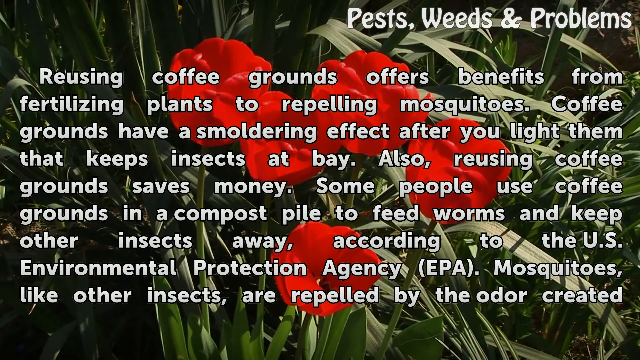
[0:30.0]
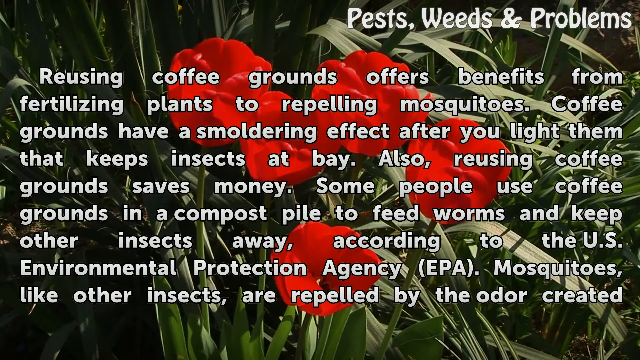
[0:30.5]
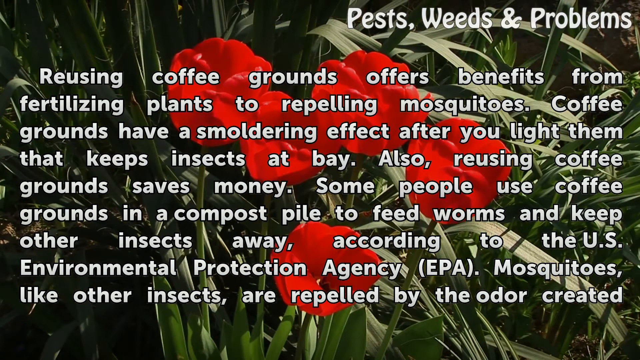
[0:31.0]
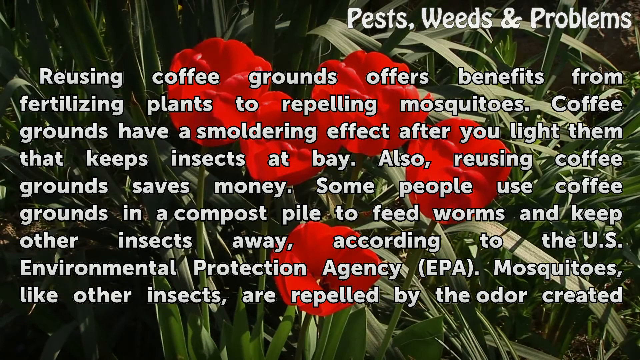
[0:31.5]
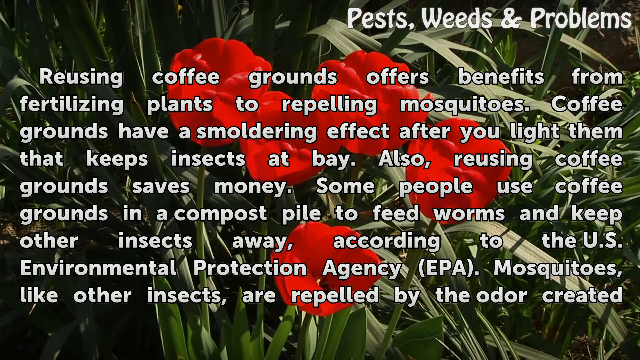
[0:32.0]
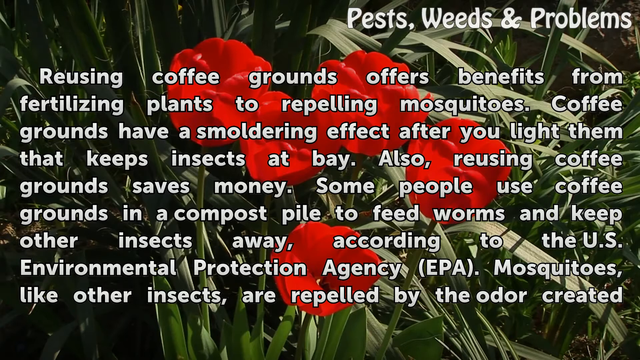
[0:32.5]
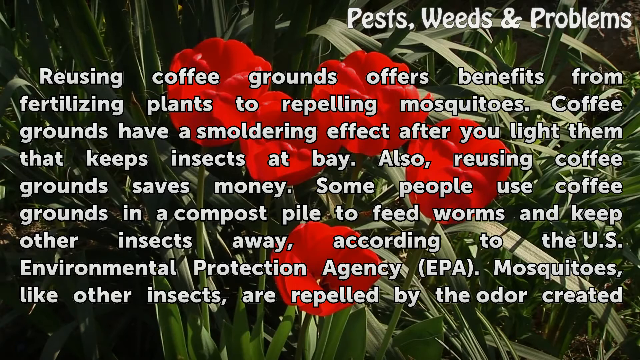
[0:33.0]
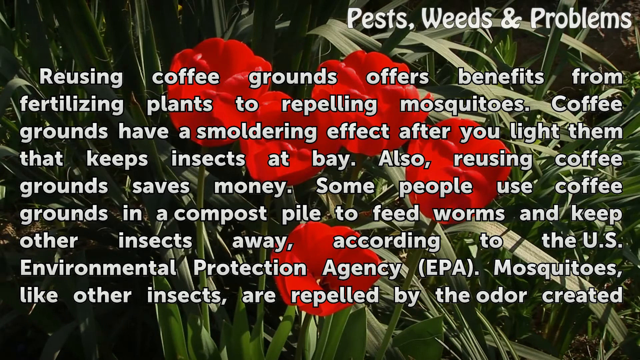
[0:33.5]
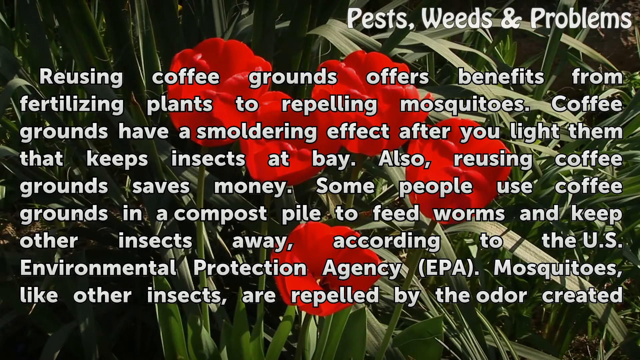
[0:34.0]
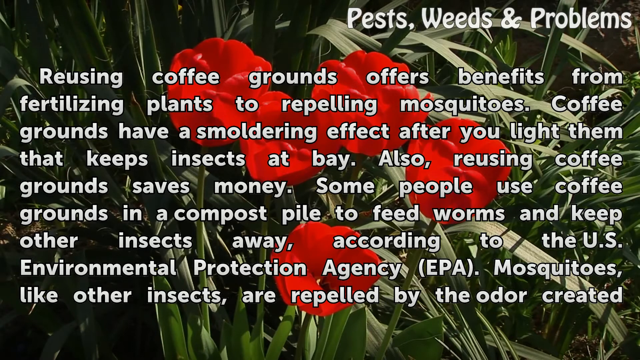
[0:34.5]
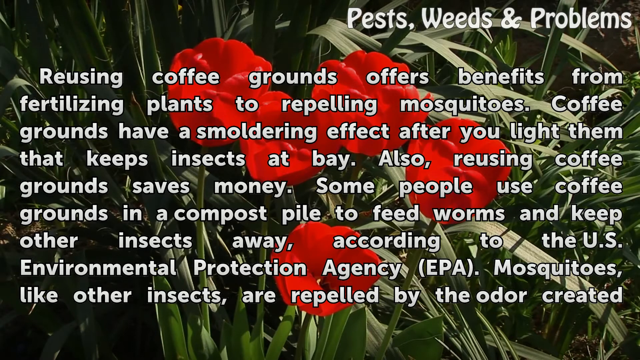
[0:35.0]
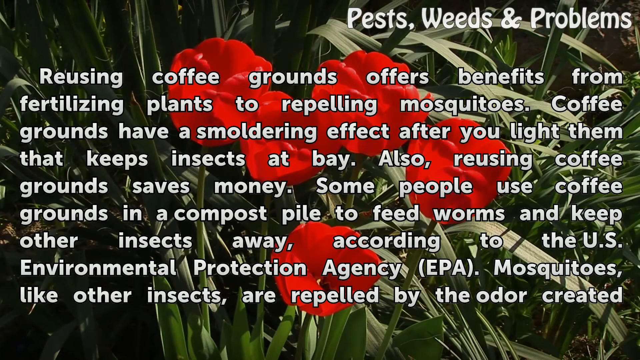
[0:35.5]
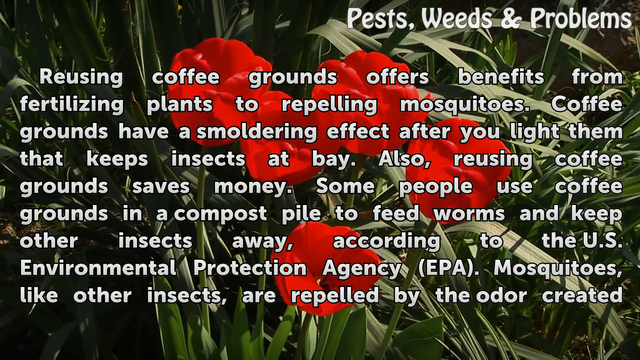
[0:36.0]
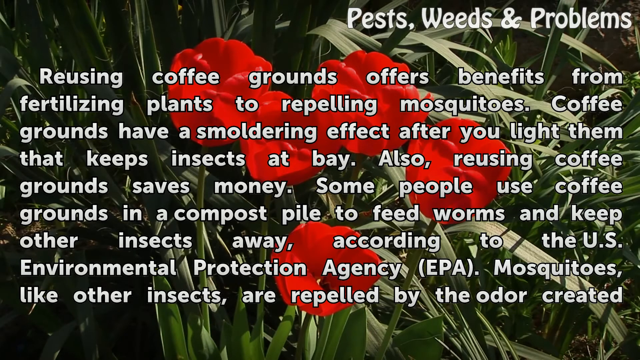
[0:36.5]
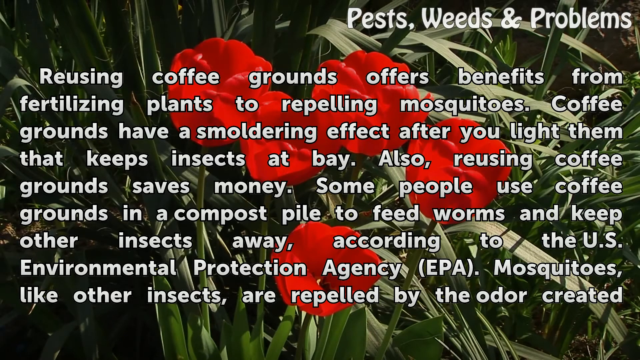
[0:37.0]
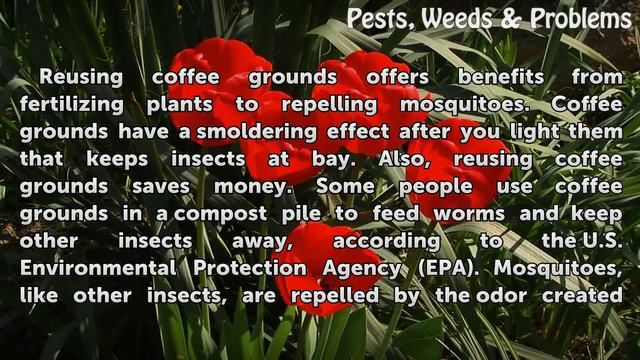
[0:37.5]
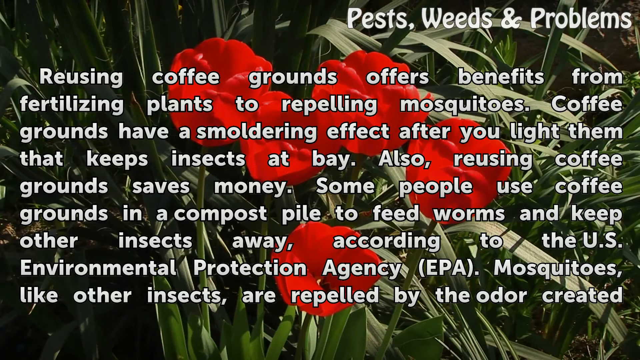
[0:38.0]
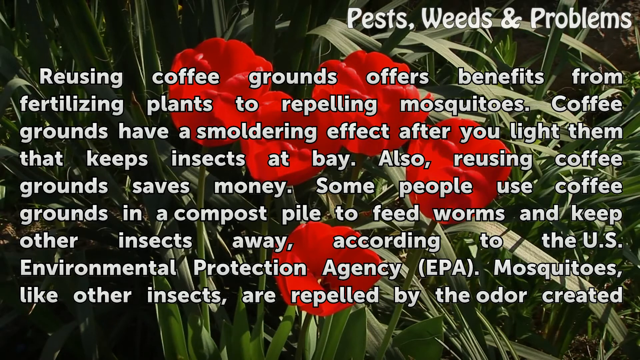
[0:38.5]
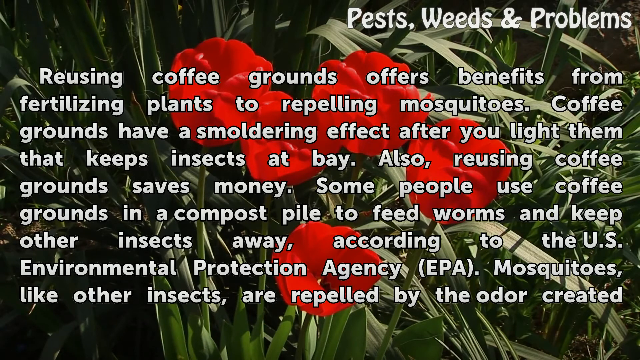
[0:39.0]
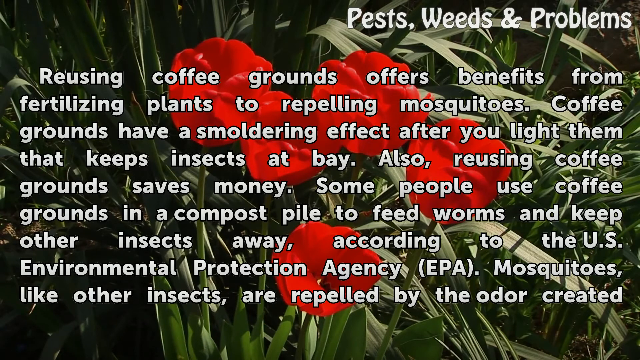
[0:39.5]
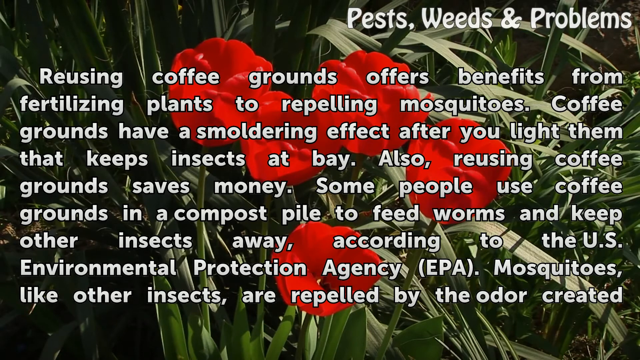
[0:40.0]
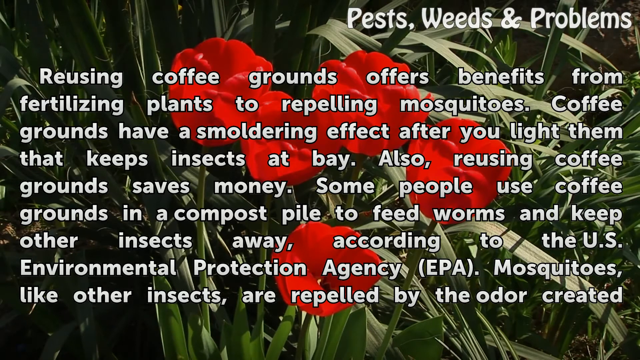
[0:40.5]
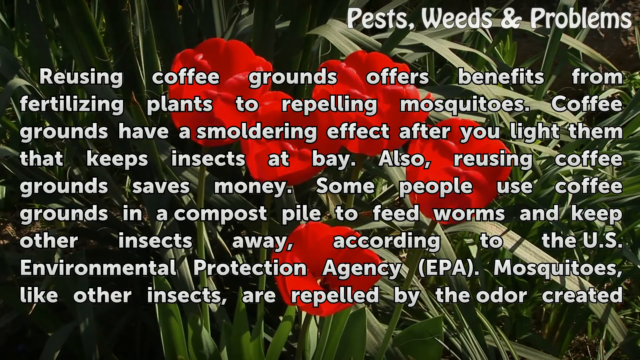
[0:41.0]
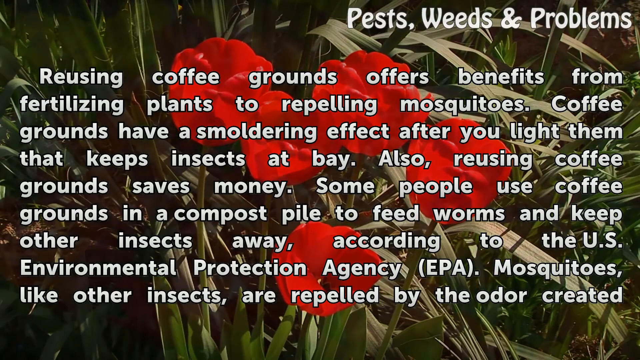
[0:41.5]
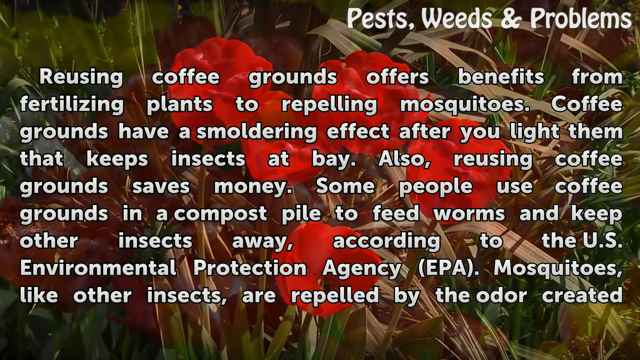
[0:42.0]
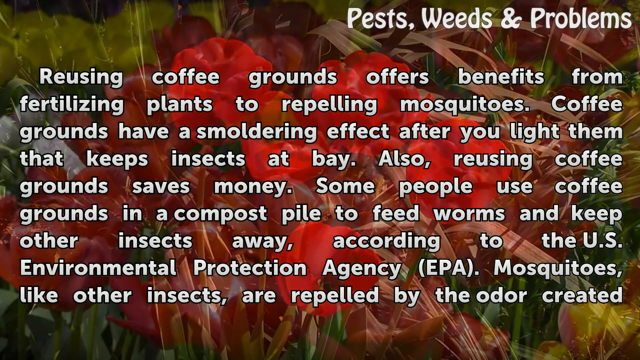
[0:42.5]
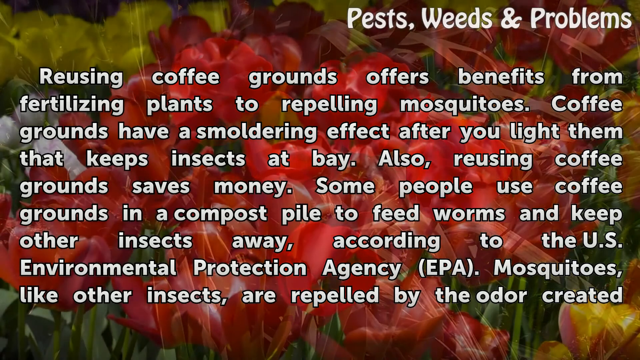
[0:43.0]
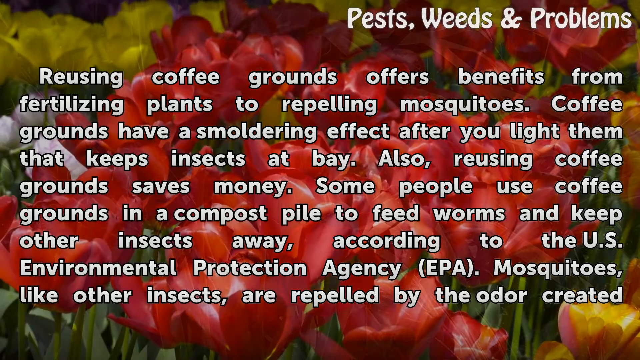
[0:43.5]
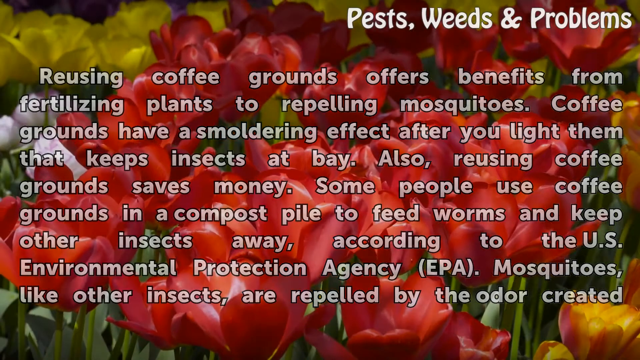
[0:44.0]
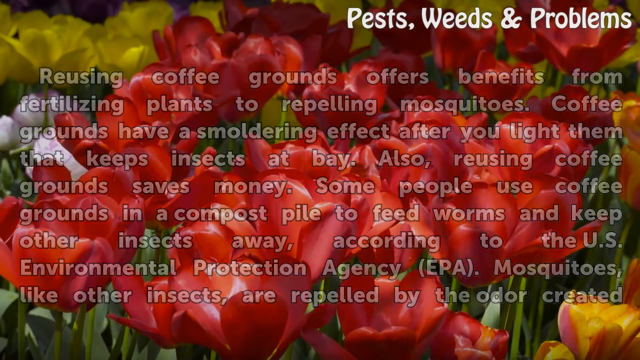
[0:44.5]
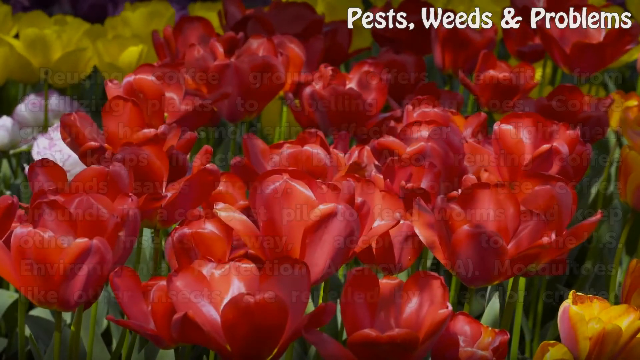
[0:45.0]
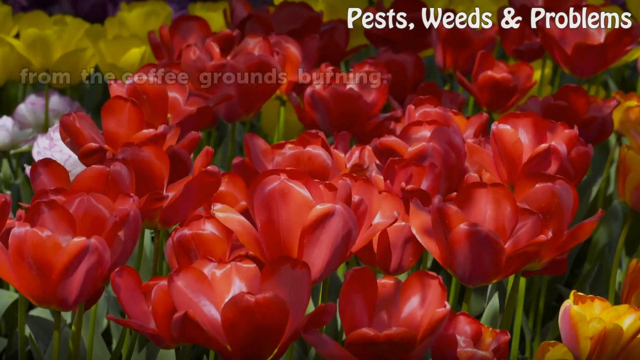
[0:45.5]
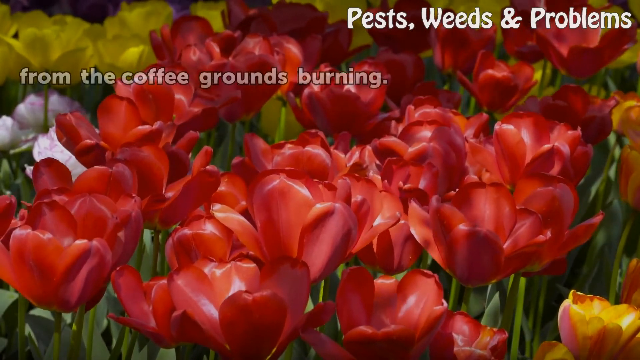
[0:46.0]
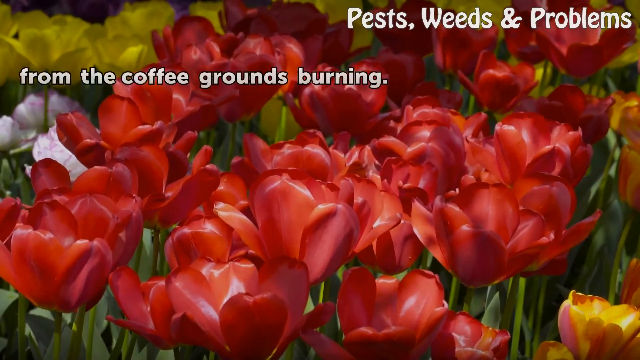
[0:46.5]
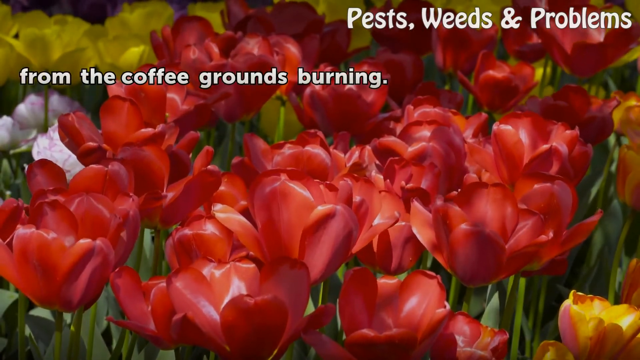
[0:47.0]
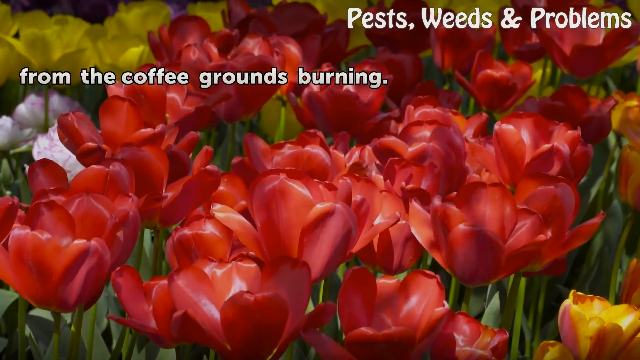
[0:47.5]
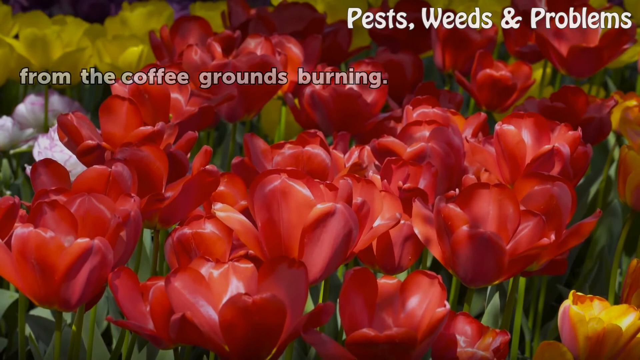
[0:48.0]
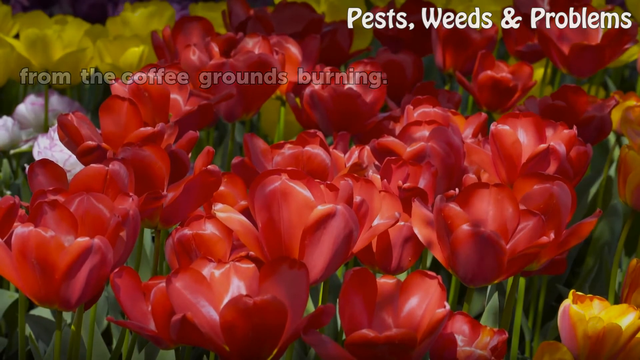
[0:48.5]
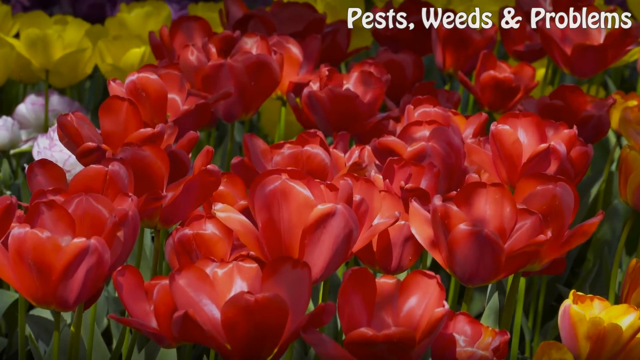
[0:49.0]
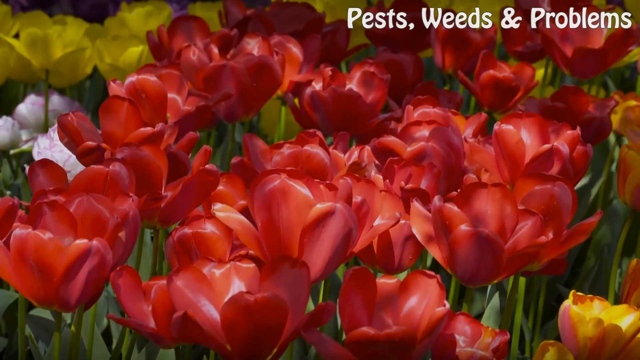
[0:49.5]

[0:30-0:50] A photograph shows five red flowers that look like tulips in the middle of the screen, with green leaves all around them. Text over the front of the screen reads: "reusing coffee grounds offers benefits from fertilizing plants to repelling mosquitoes coffee grounds have a smoldering effect after you light them that keeps insects at bay also reusing coffee grounds saves money some people use coffee grounds in a compost pile to feed worms and keep other insects away according to the U.S. Environment Protection Agency mosquitoes like other insects are repelled by the odor created." The text fades away, and the background changes to other red flowers, a lot of them, probably 30 or 40. Off to the left in the background are yellow flowers behind them, and maybe some white flowers with purple tips on their petals.